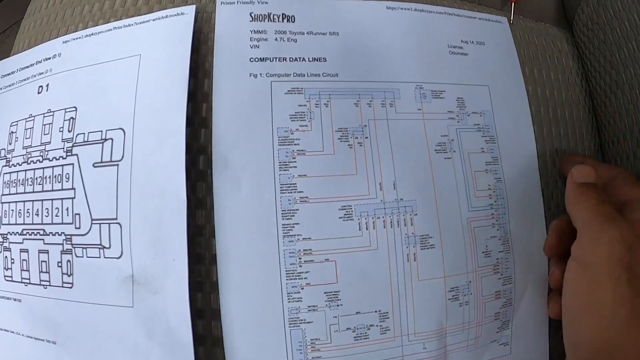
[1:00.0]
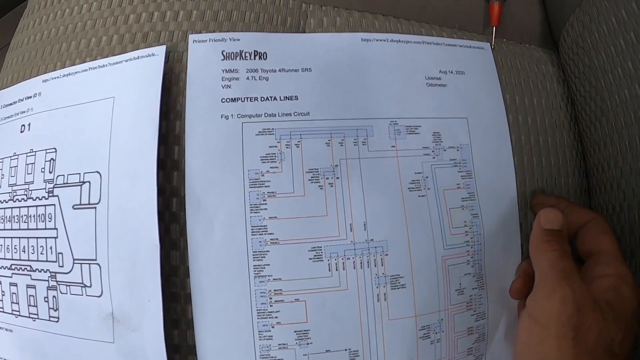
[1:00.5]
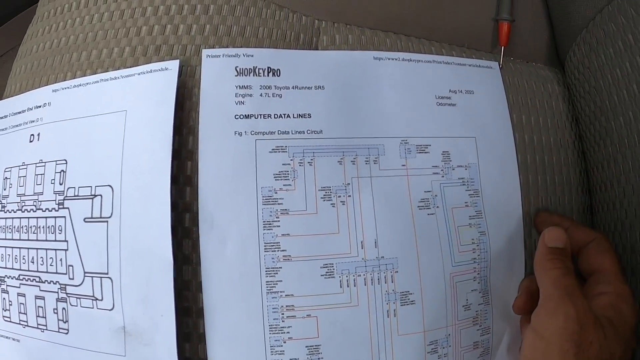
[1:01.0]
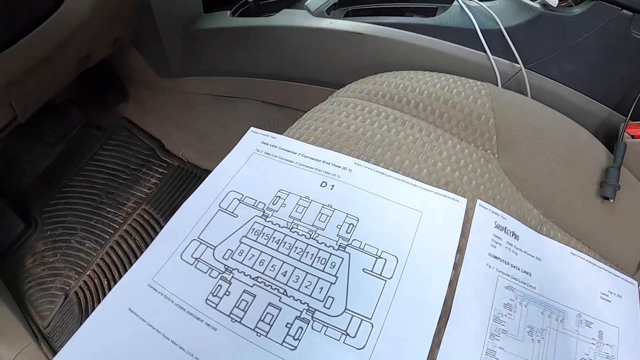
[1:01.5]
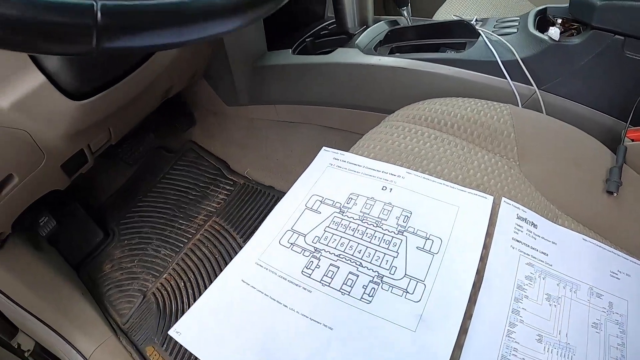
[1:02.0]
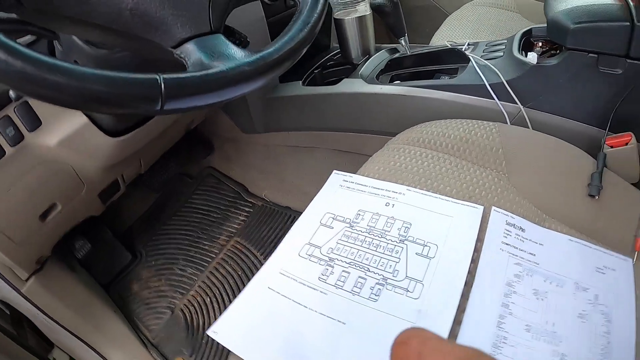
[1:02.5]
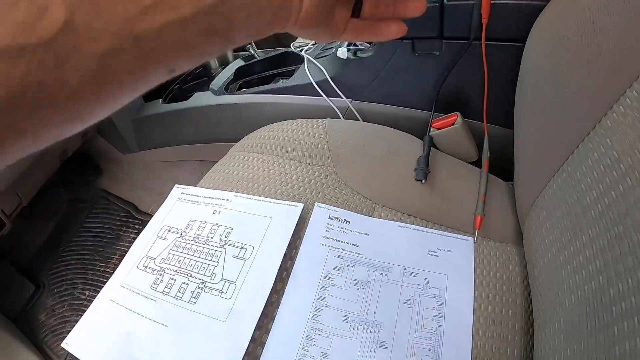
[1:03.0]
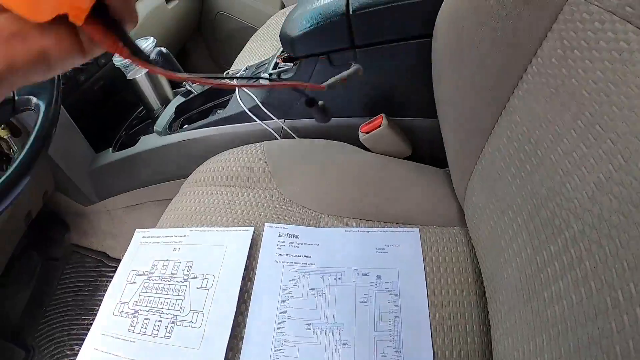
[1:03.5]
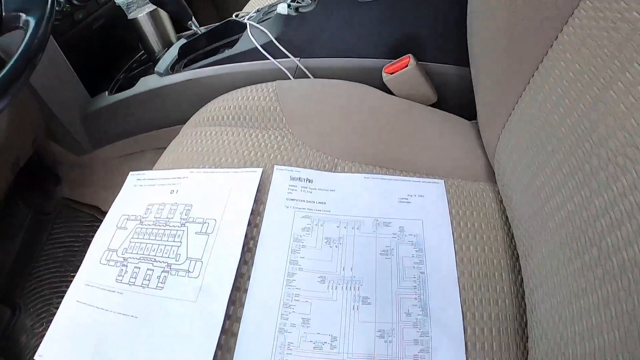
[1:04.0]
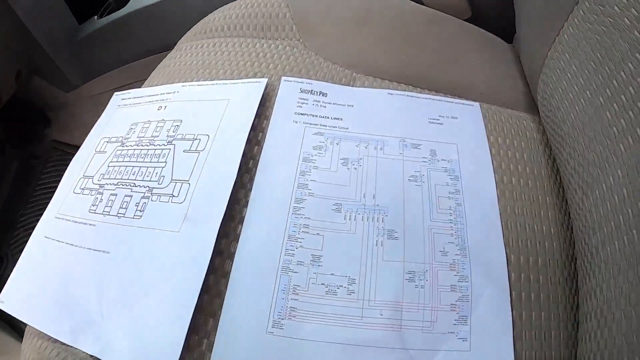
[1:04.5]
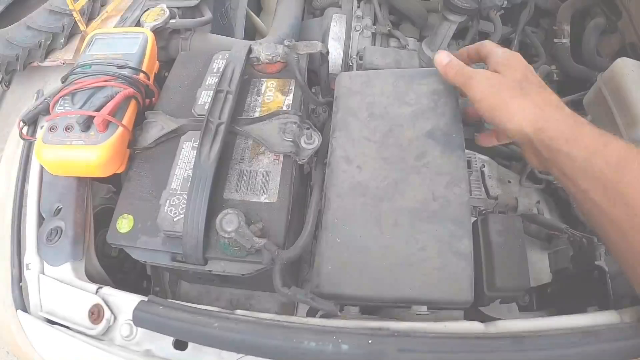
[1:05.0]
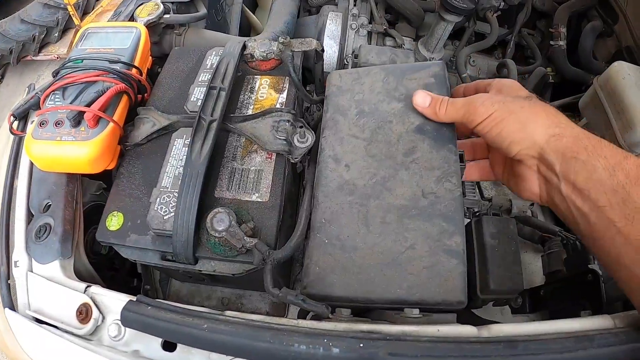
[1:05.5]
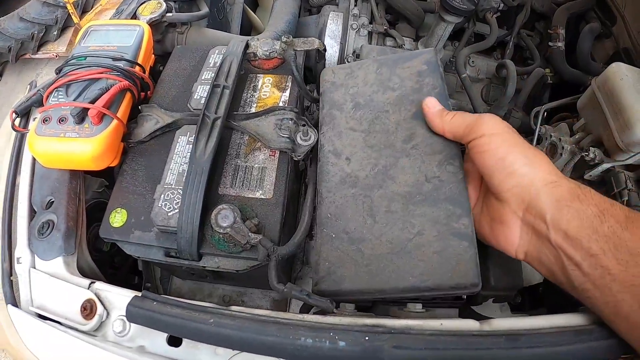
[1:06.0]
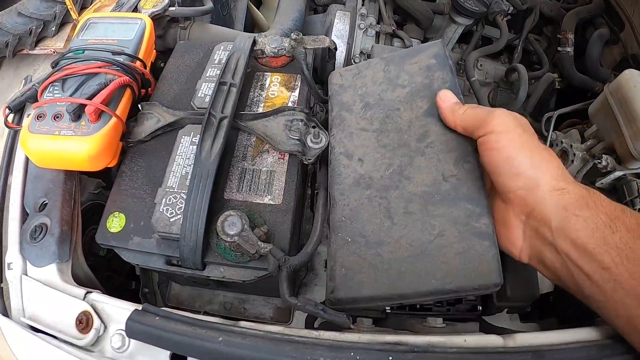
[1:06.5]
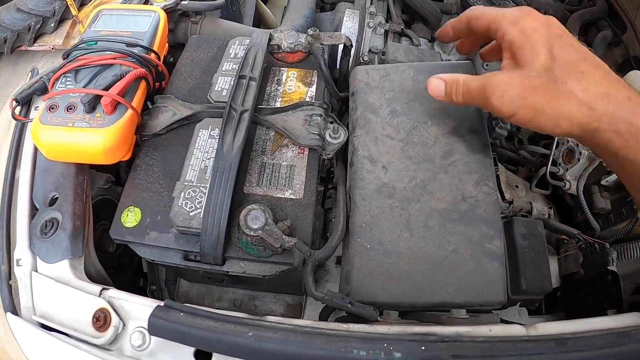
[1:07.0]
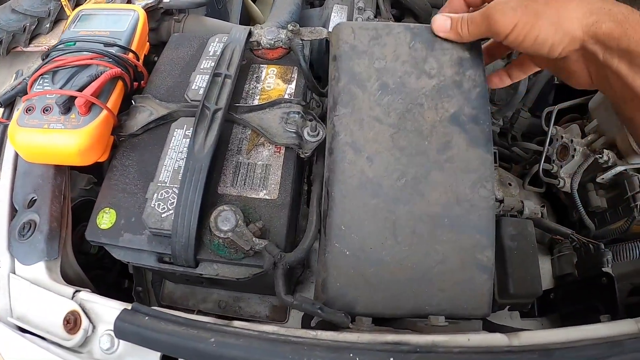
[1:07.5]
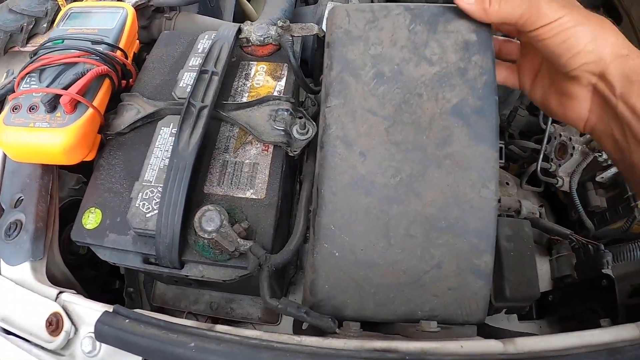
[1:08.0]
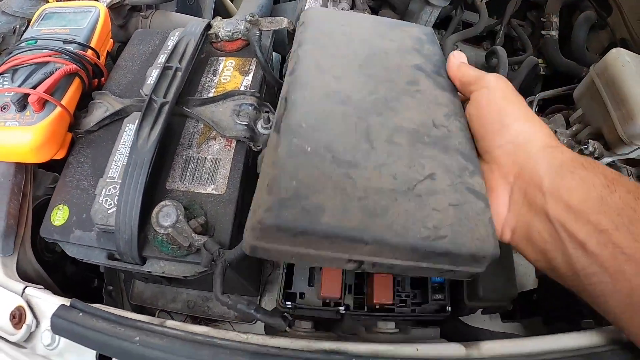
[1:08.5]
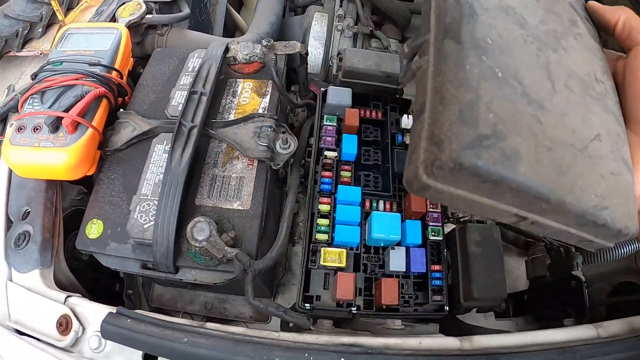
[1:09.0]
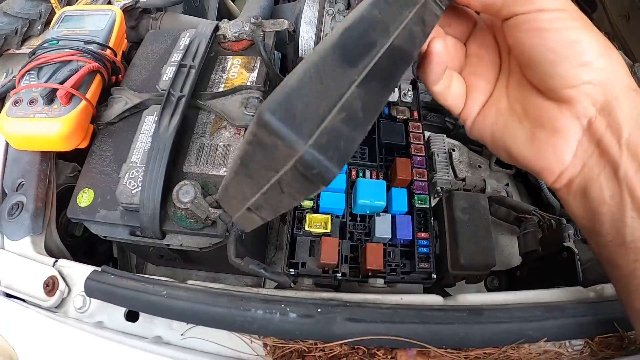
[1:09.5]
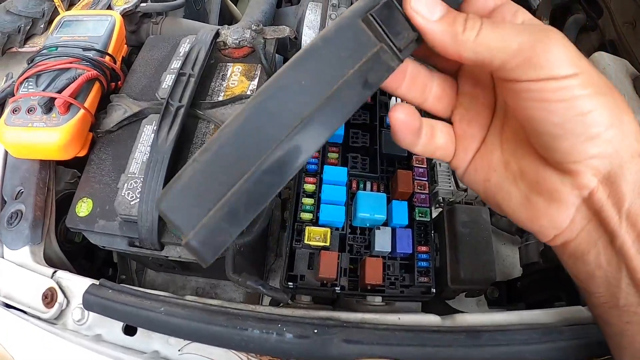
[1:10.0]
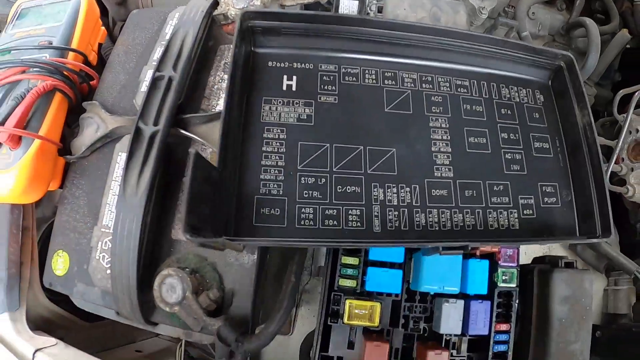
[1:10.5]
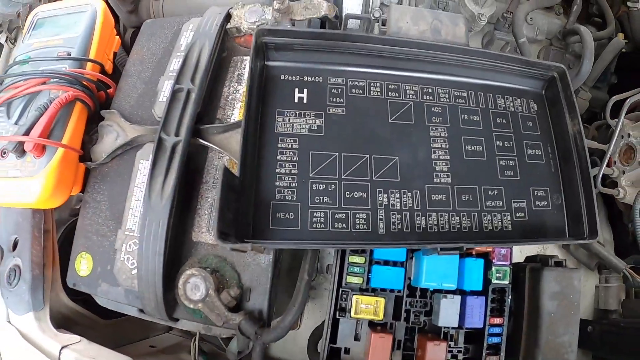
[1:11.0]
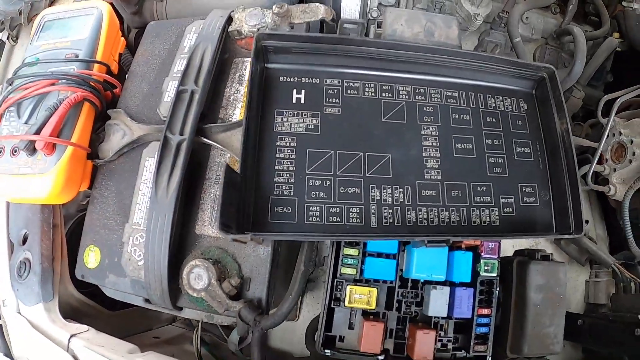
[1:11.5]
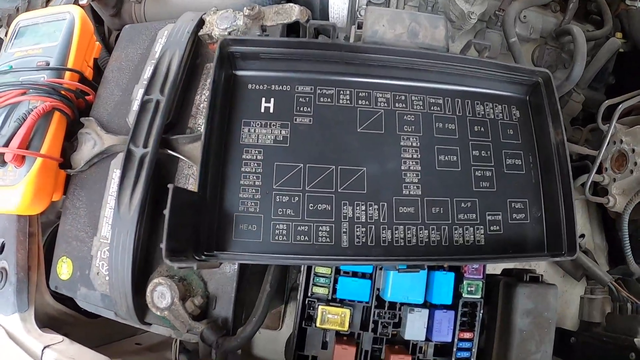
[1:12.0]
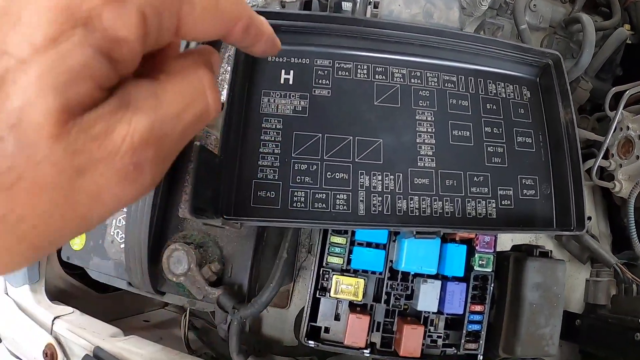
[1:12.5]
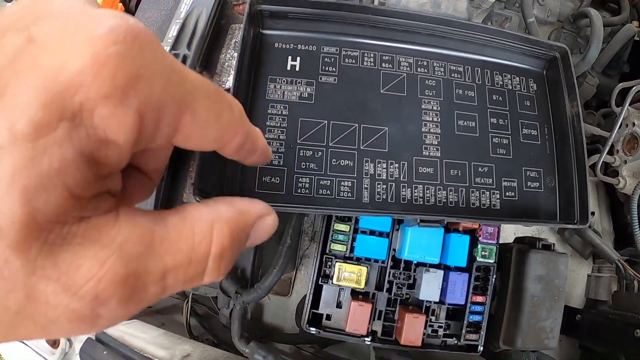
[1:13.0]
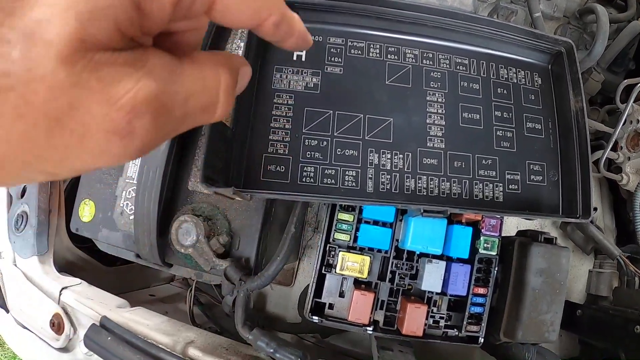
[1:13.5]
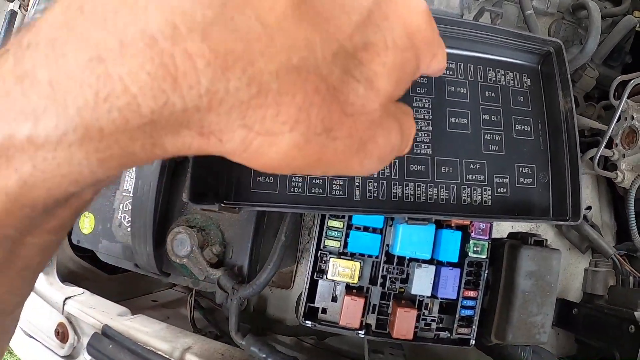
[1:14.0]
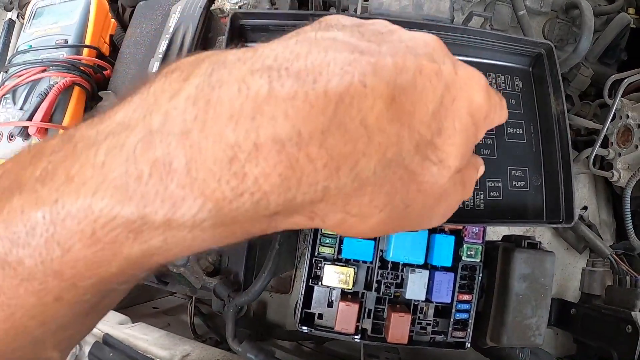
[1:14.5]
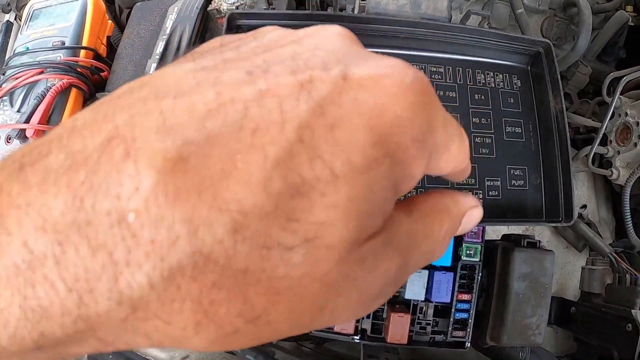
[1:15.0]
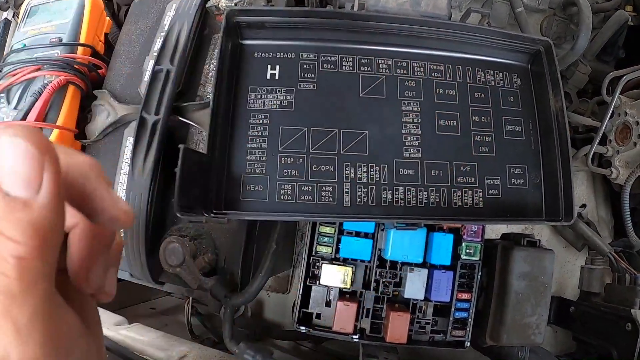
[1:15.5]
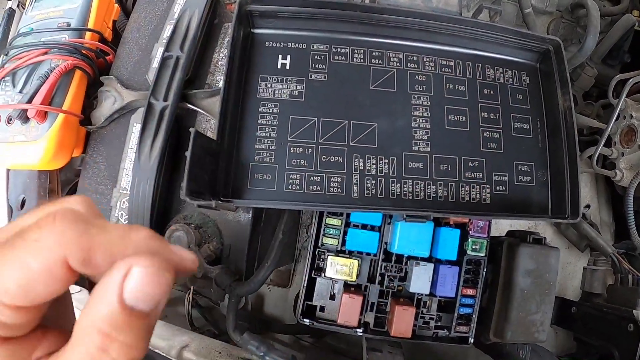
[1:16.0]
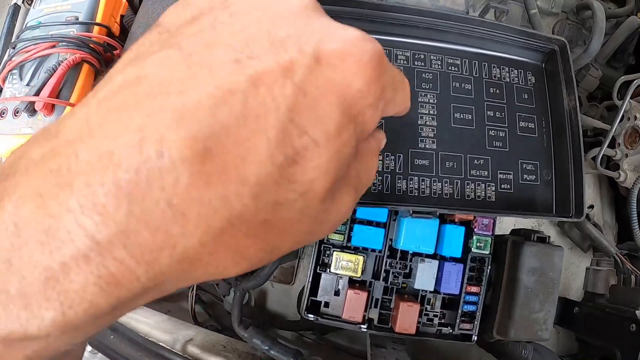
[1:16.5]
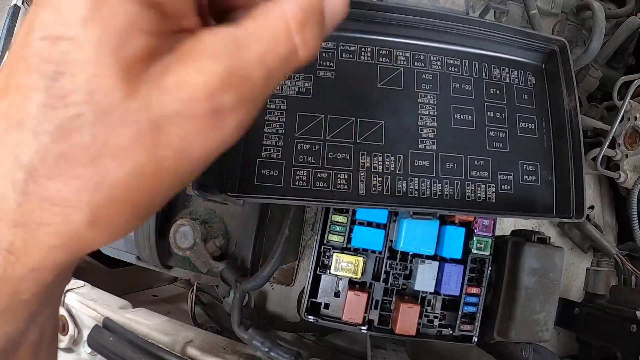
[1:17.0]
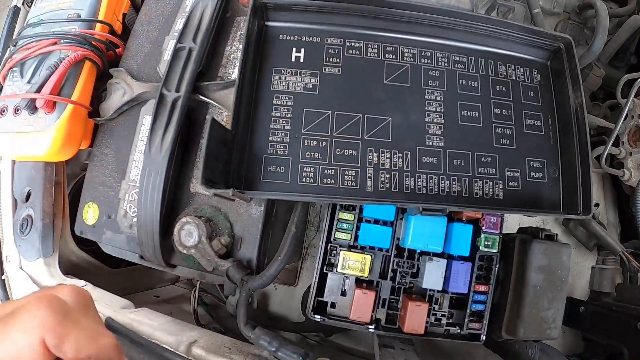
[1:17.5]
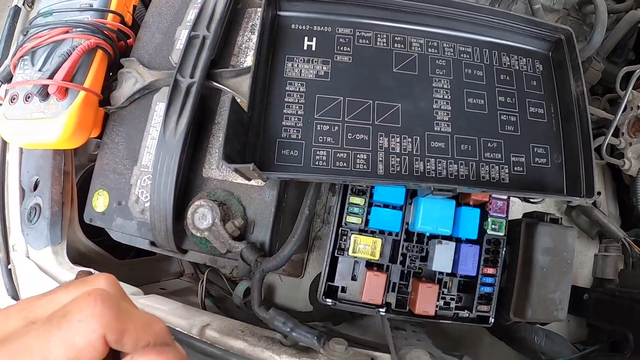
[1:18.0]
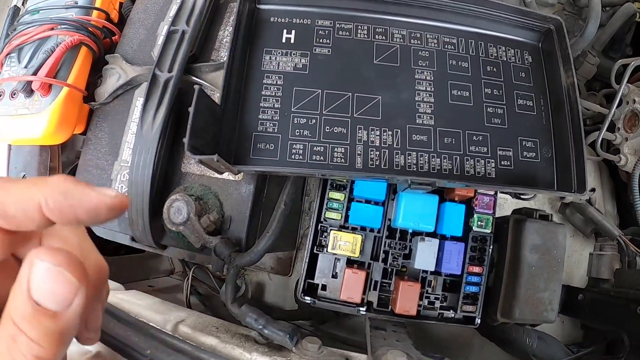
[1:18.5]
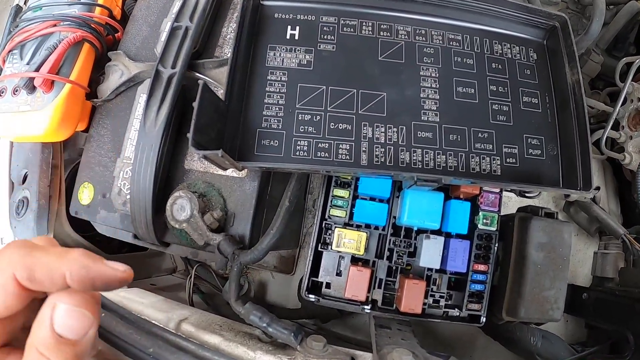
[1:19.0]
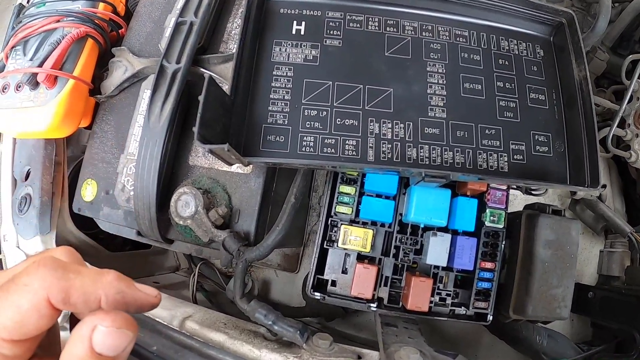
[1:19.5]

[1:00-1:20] One sheet of paper reads "ShopKeyPro", followed by some words that cannot be made out. The next line says "engine", followed by what looks like it could be a four and other unreadable words or letters. Then comes "VIN", which is blank, and underneath that are the computer data lines. Next to it, another sheet says "D-1". The scene then changes to the area under the hood, where the person takes a lid off. The underside looks very similar to the image on the D-1 sheet on the left, with many boxes, but instead of numbers, some boxes are blank, some have a diagonal line, and some have words. One may say "Dome".